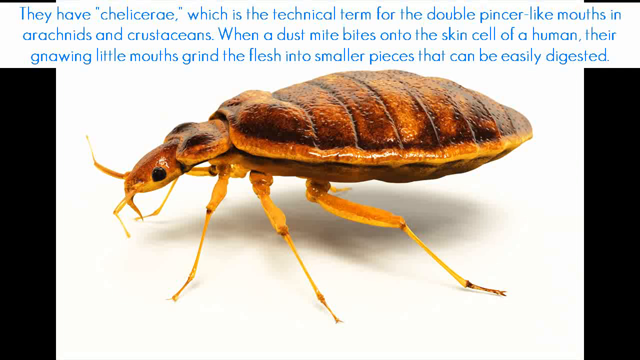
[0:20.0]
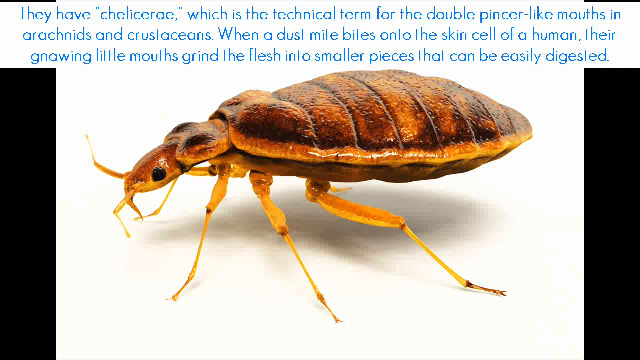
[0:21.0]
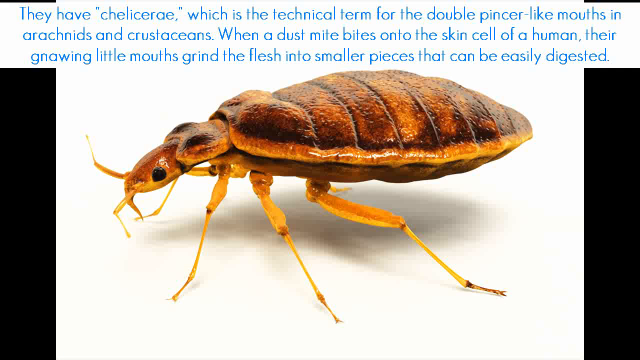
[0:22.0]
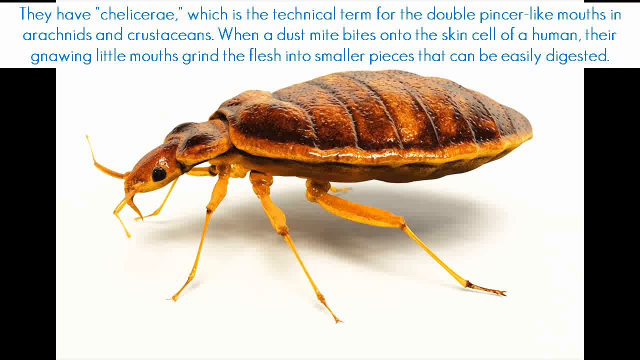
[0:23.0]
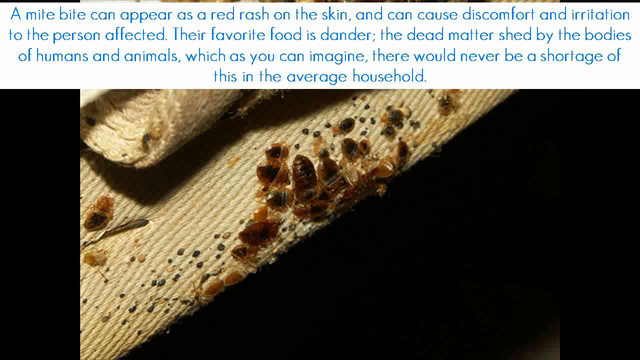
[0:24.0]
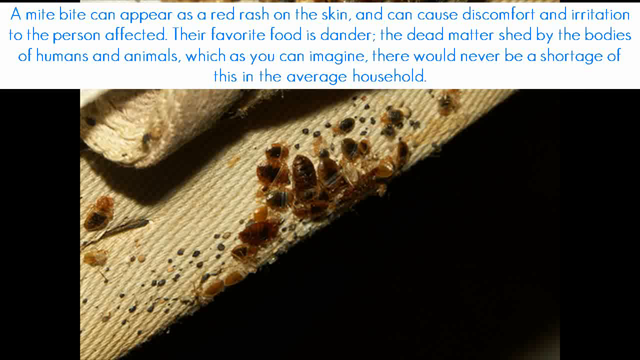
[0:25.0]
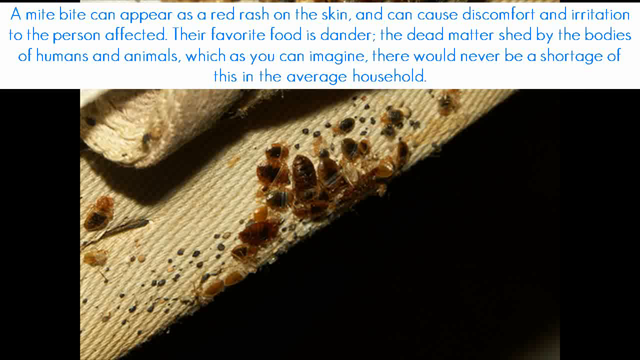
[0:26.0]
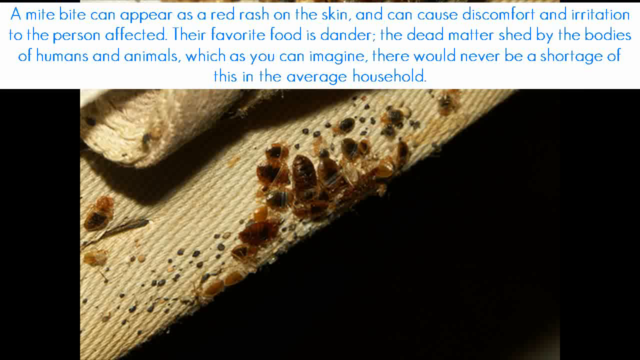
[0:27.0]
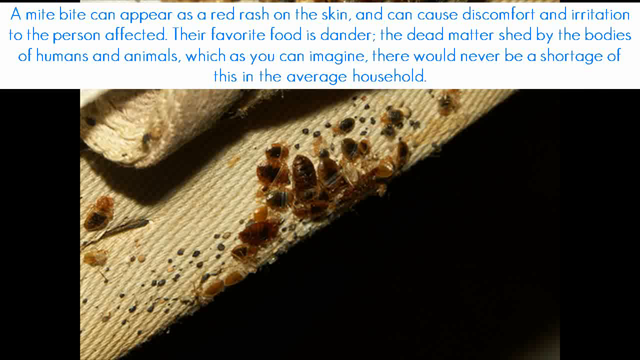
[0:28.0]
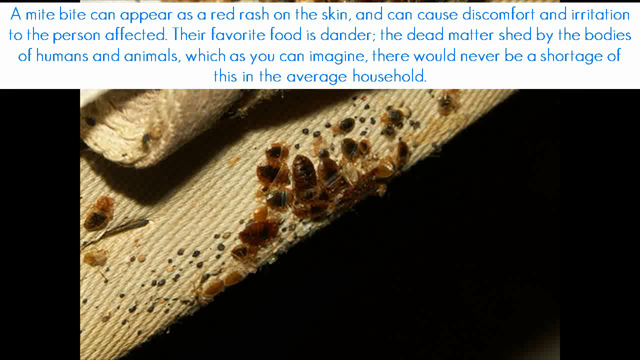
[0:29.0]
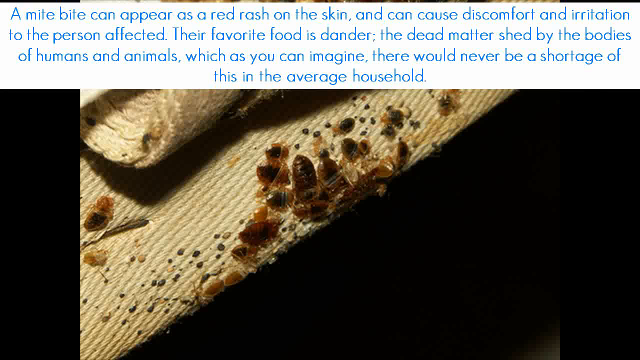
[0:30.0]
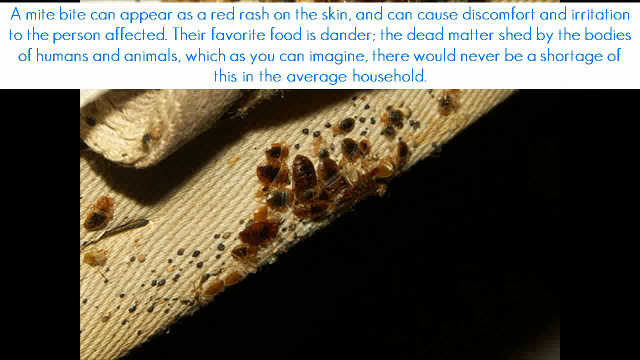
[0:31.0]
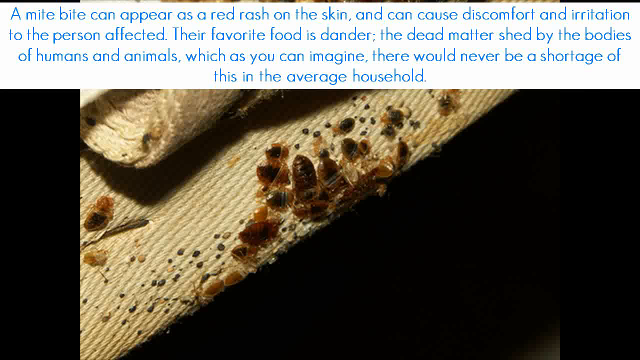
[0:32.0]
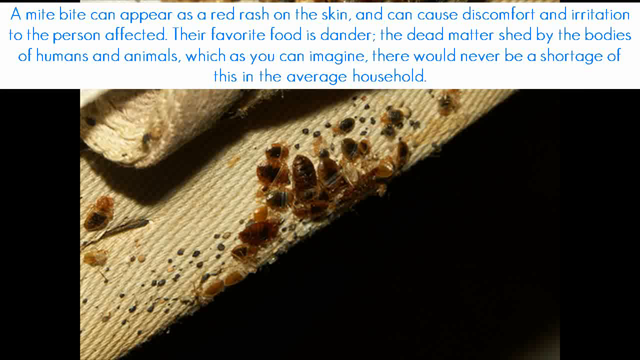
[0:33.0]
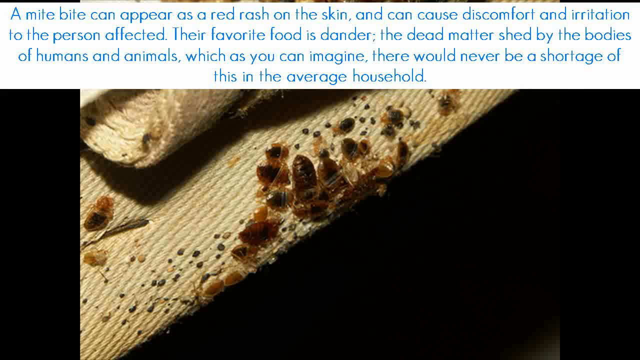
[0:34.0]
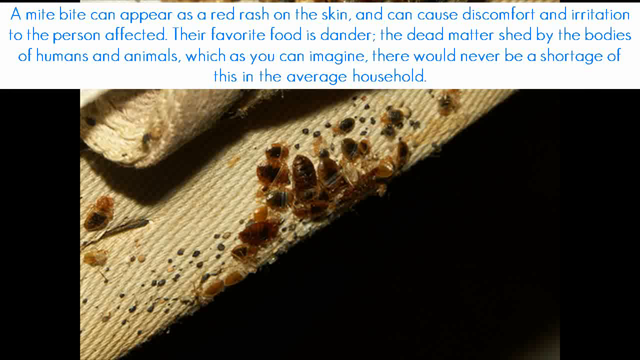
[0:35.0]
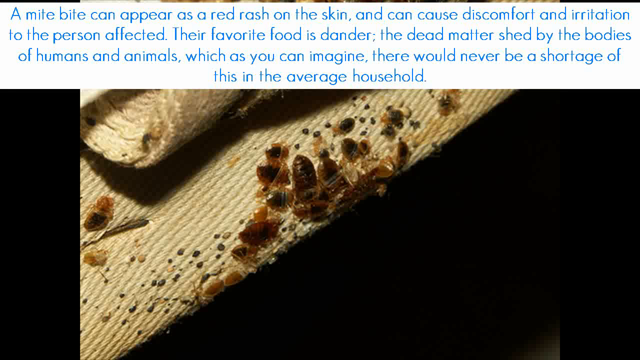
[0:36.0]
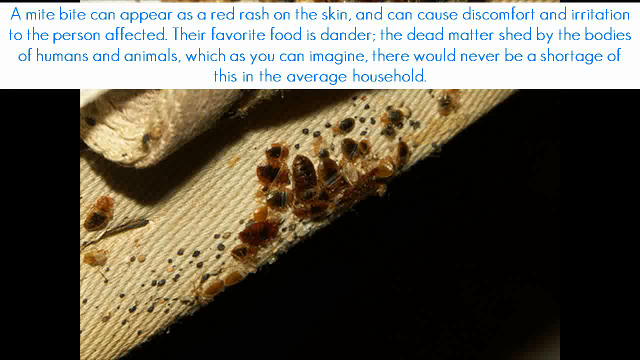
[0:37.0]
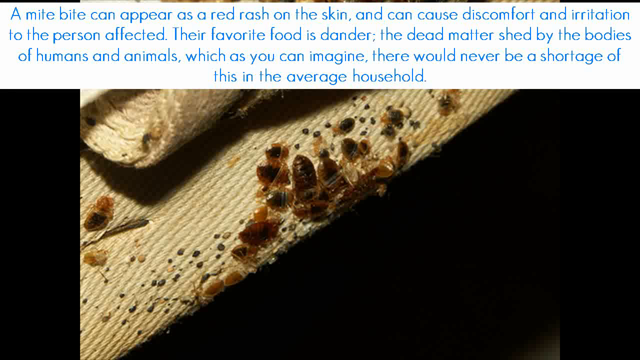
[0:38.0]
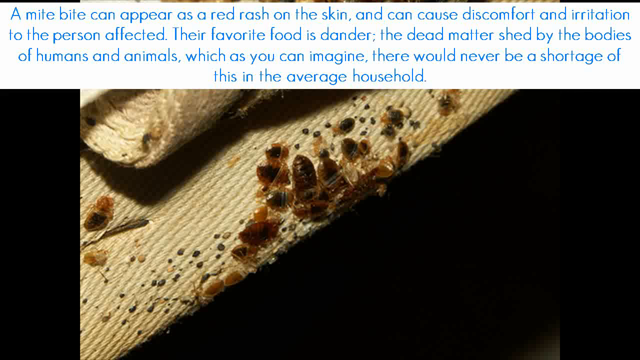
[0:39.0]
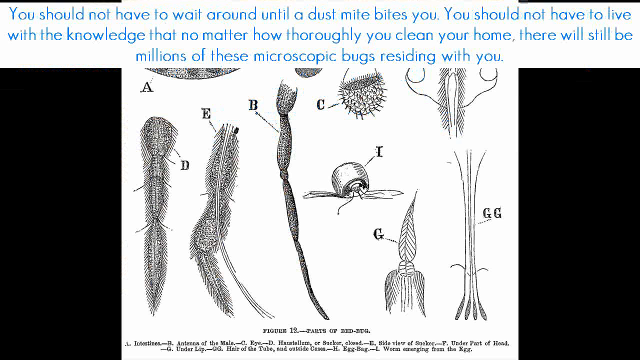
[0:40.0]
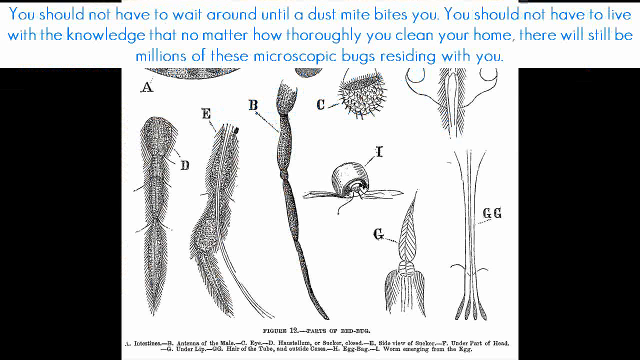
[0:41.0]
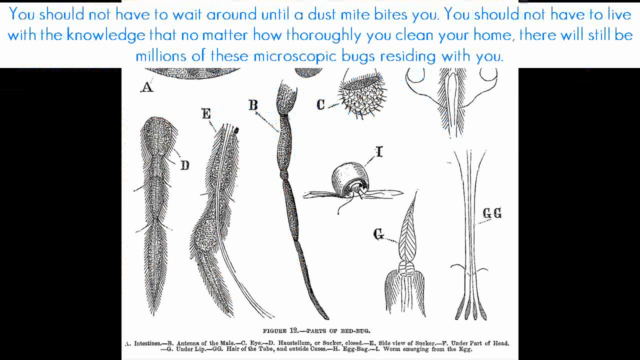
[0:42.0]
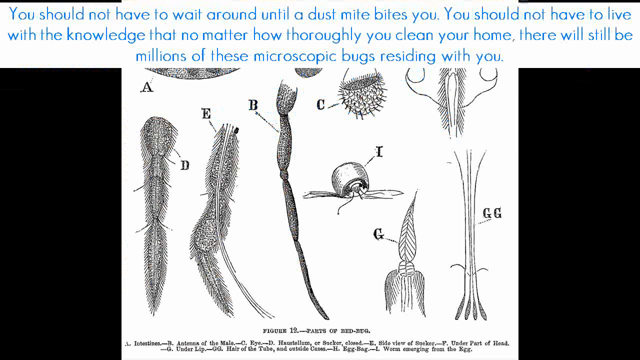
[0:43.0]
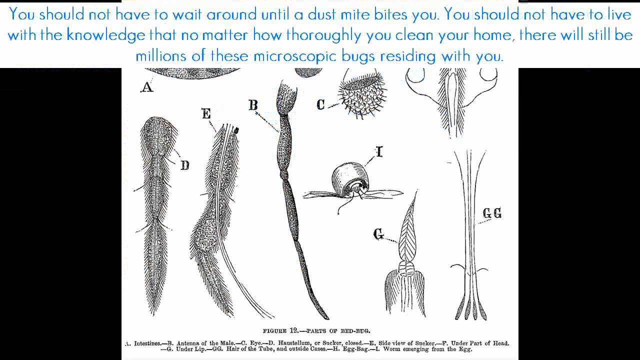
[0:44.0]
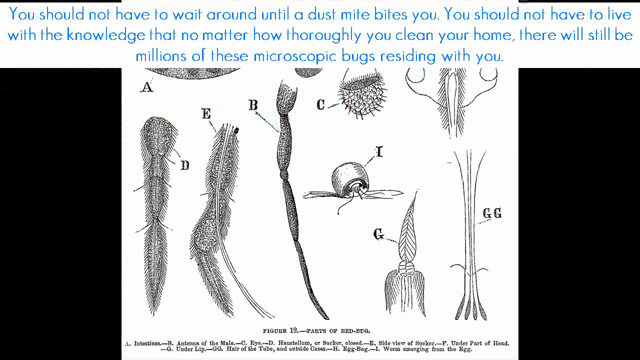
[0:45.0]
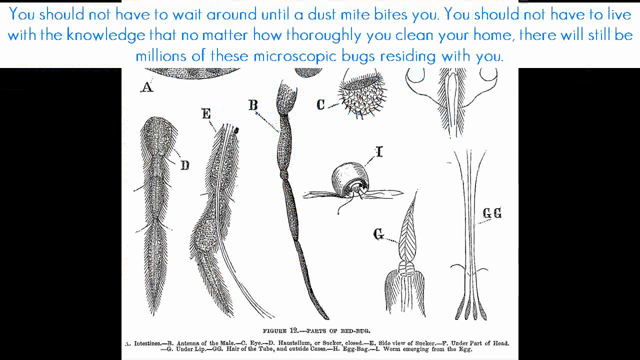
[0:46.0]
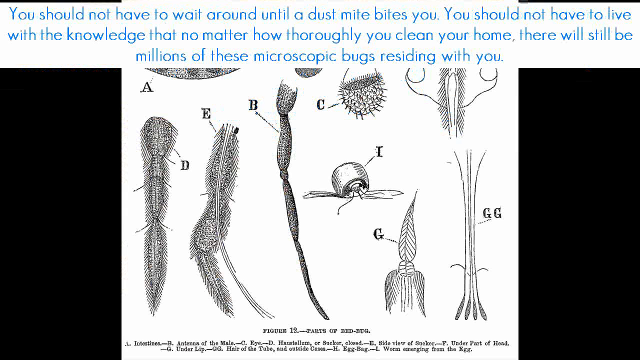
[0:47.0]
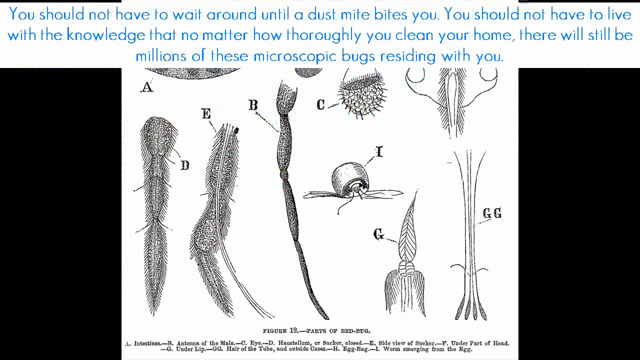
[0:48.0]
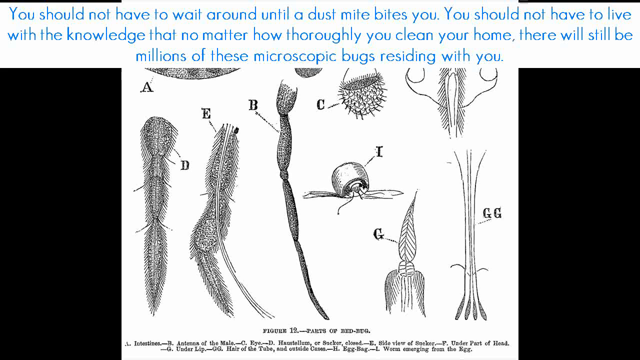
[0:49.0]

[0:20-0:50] Text continues about dust mites and their build, describing them as similar to arachnids and crustaceans, and saying they bite onto human skin cells and gnaw the skin into smaller pieces so they can easily digest it. The text then says dust mites are everywhere, that no matter how thoroughly a house is cleaned there will always be dust mites, that no one should have to live in fear of them, and that there are millions of them around at all times. A brief breakdown of what looks like each part of the dust mite flashes by quickly. The text also stresses that there is skin everywhere, including in your bed.